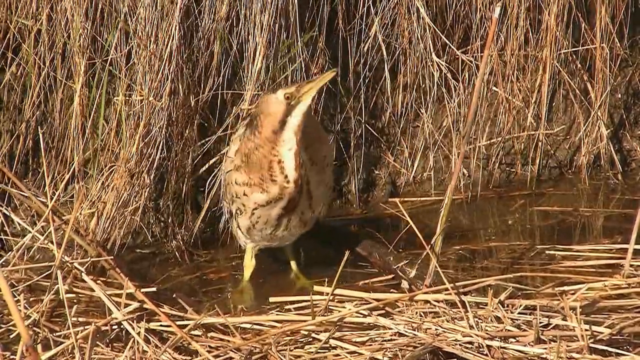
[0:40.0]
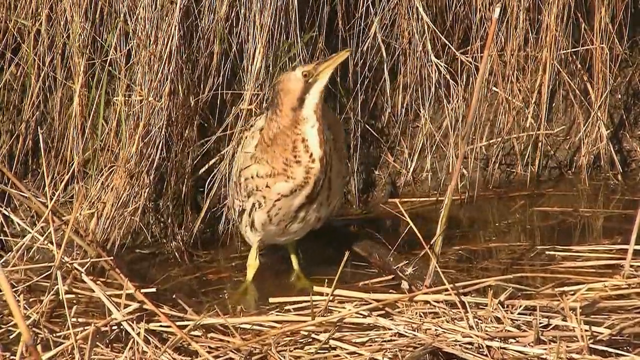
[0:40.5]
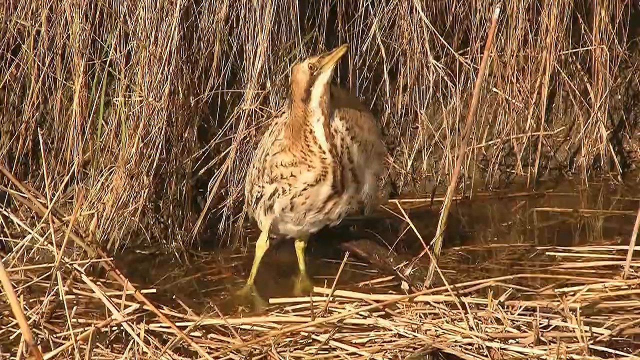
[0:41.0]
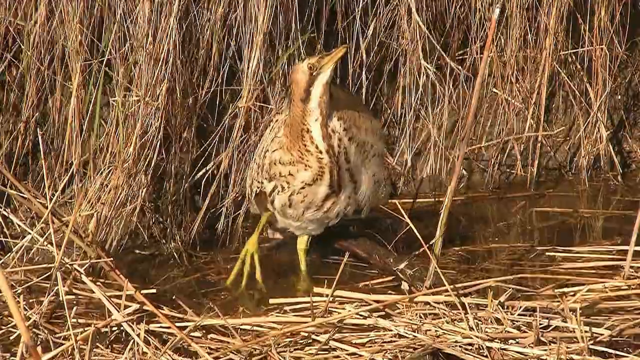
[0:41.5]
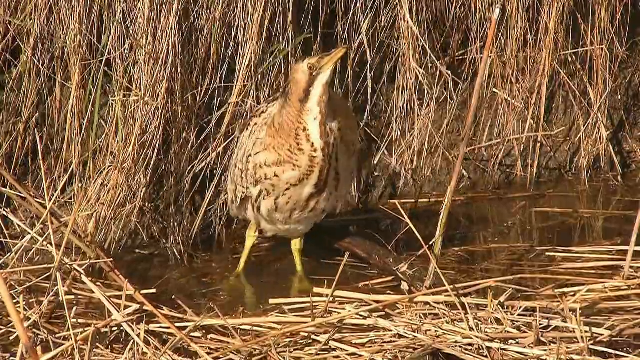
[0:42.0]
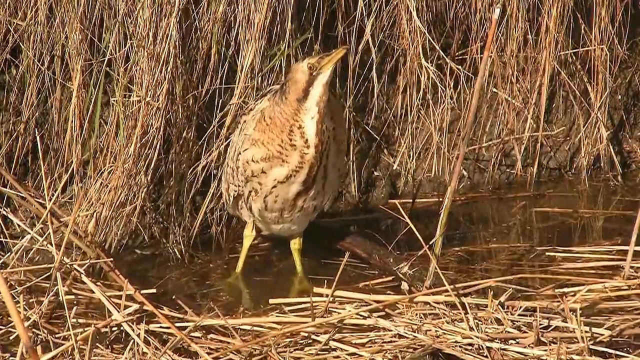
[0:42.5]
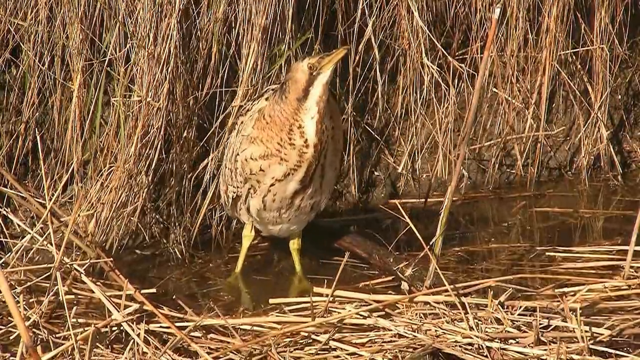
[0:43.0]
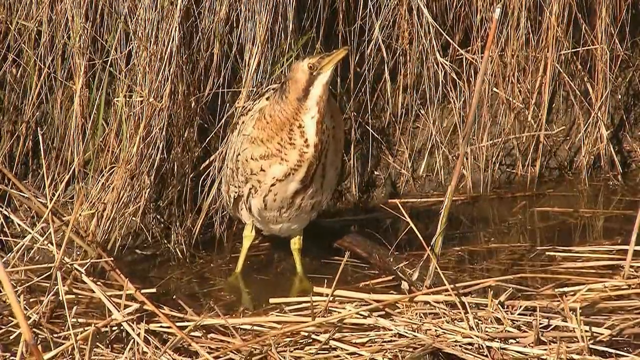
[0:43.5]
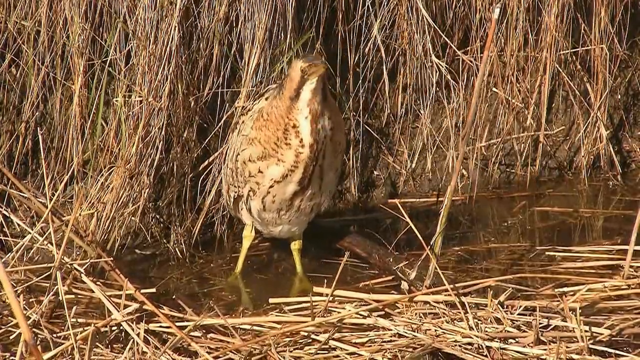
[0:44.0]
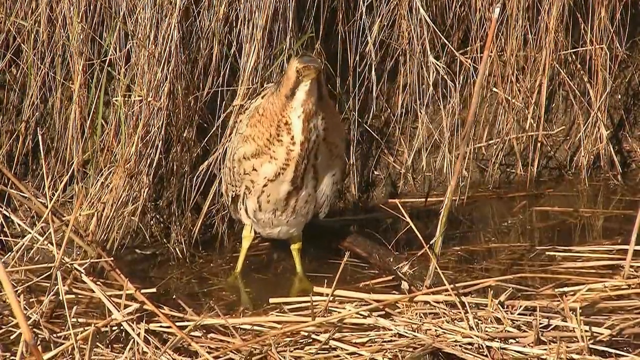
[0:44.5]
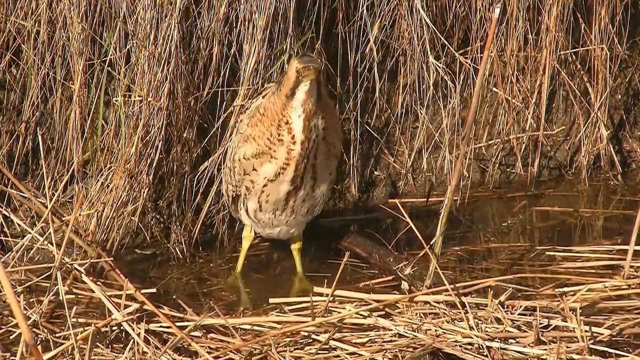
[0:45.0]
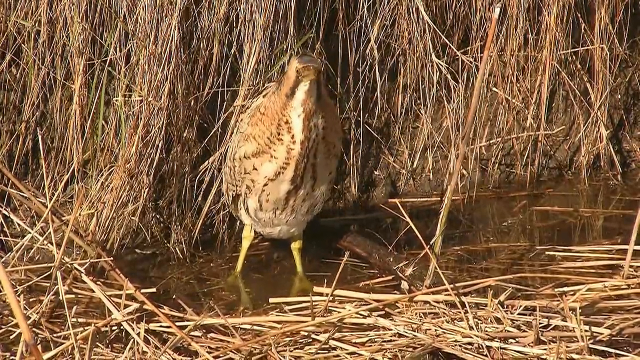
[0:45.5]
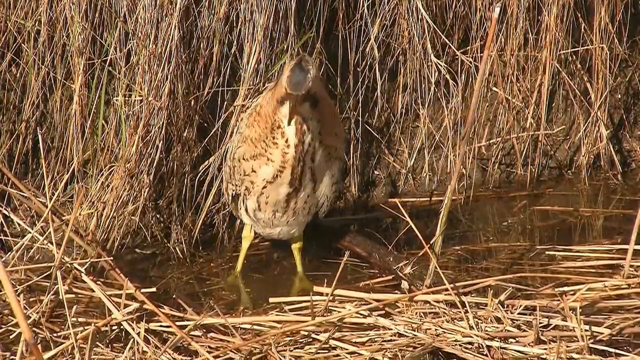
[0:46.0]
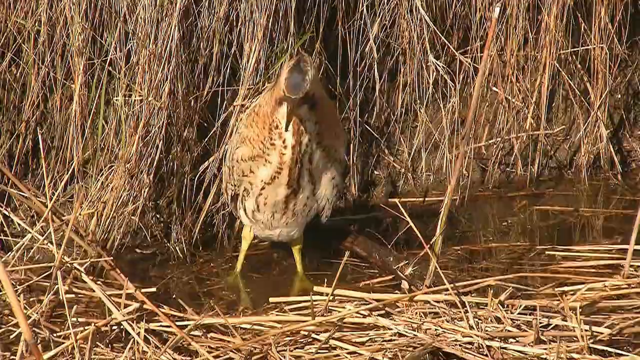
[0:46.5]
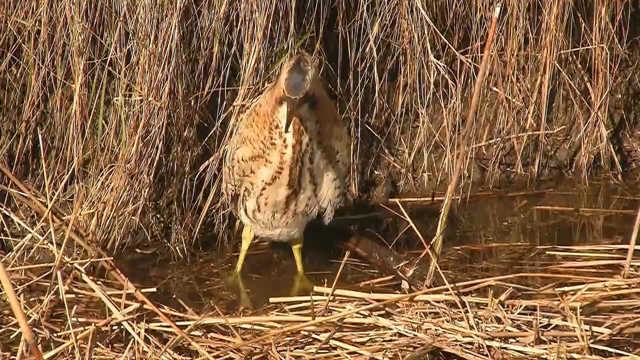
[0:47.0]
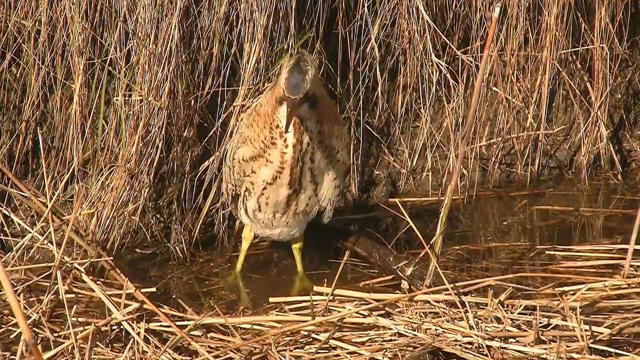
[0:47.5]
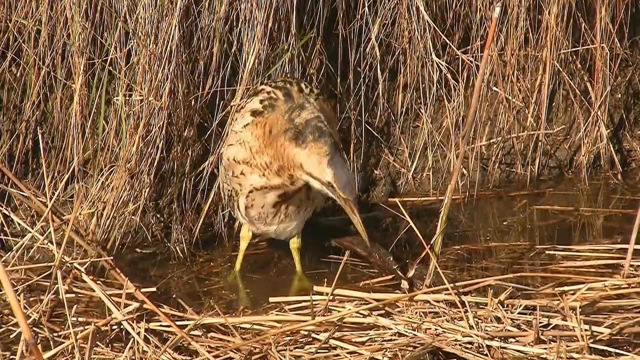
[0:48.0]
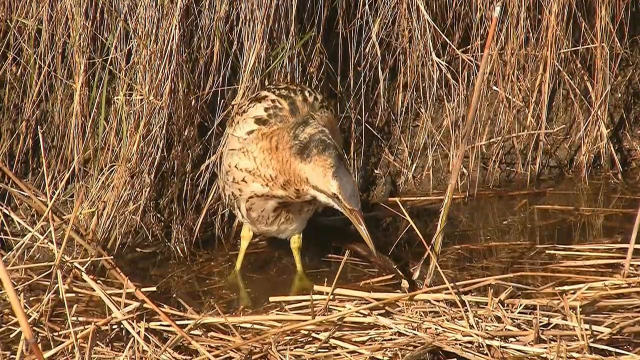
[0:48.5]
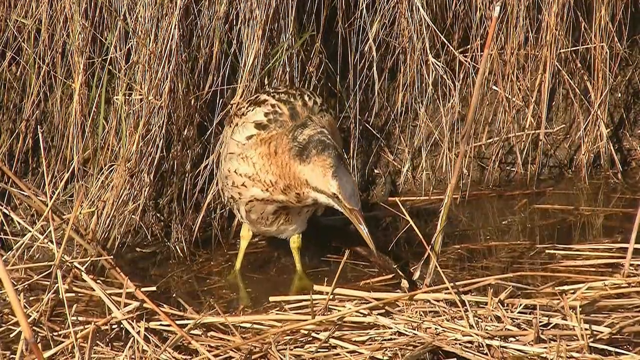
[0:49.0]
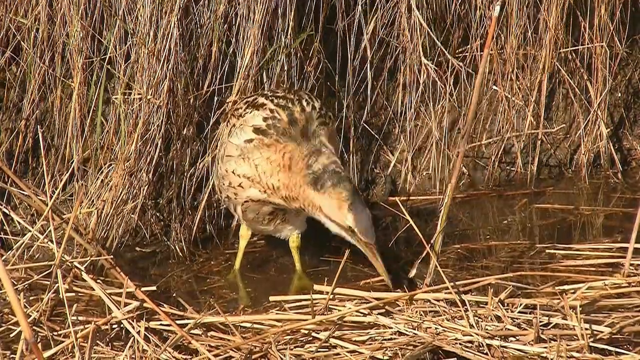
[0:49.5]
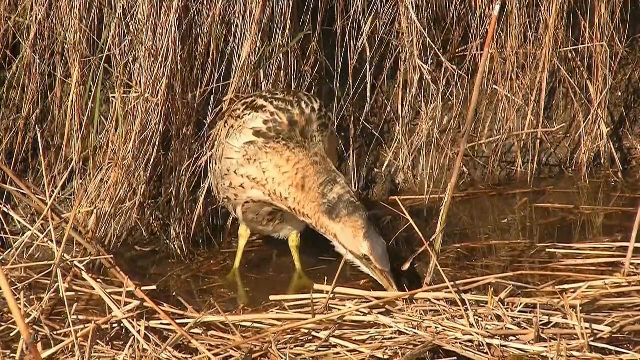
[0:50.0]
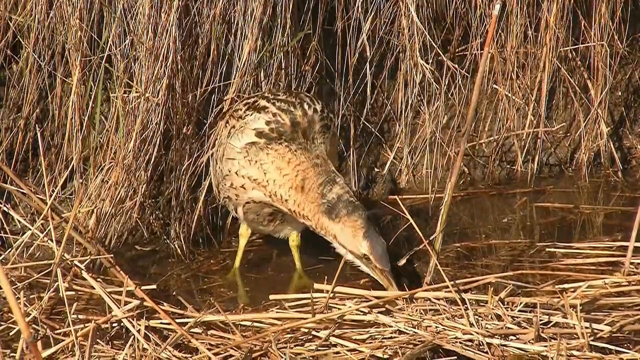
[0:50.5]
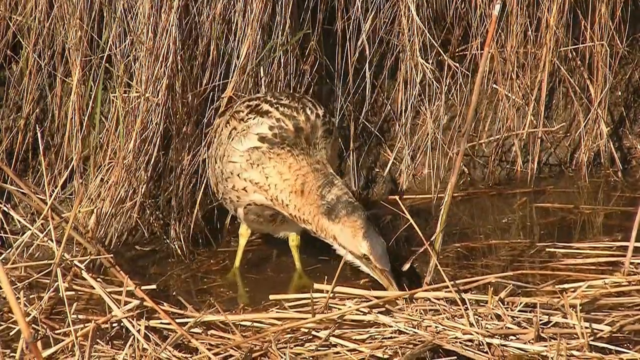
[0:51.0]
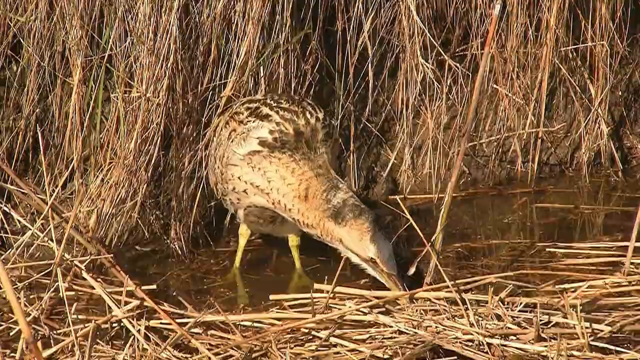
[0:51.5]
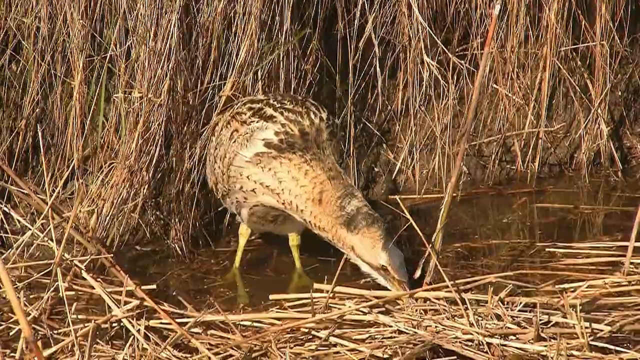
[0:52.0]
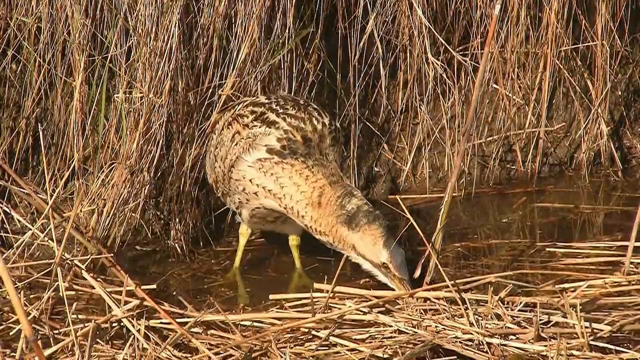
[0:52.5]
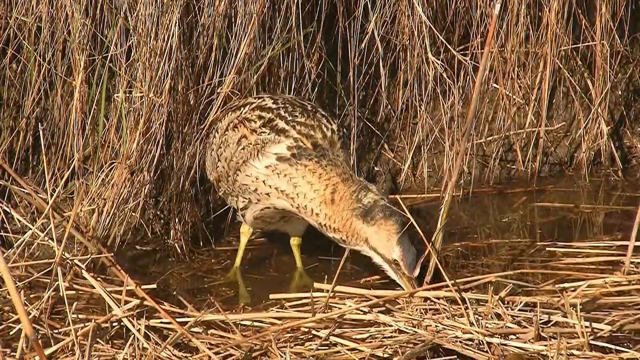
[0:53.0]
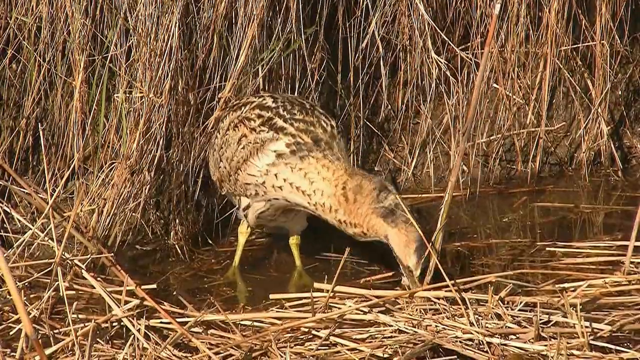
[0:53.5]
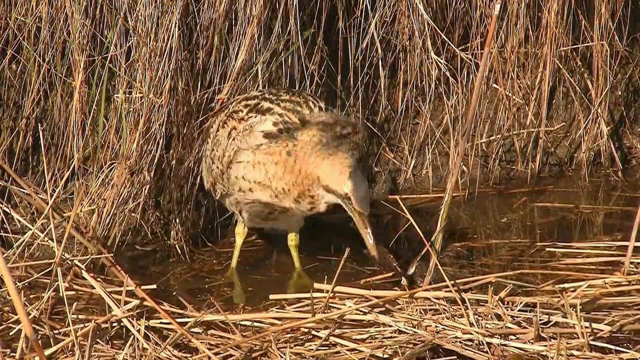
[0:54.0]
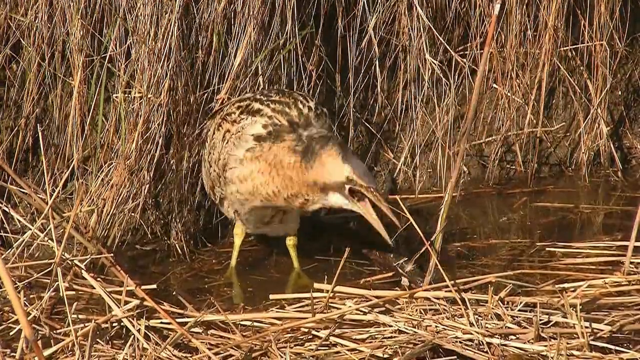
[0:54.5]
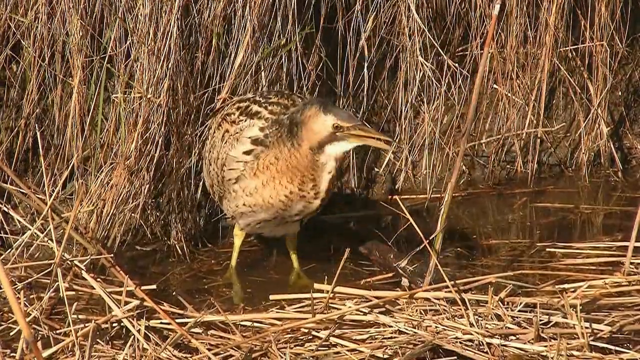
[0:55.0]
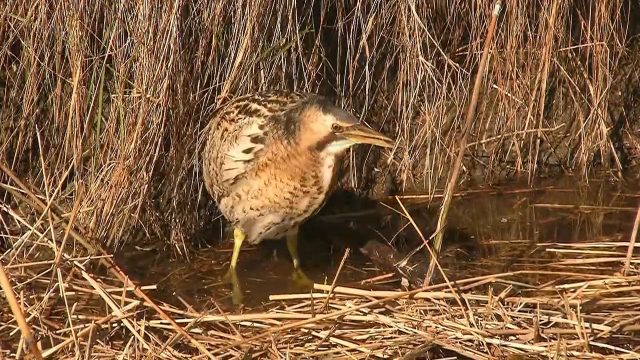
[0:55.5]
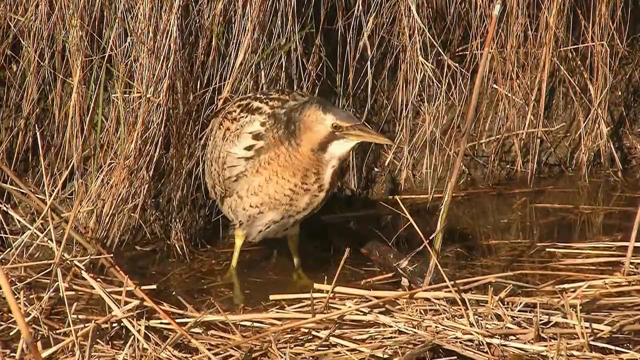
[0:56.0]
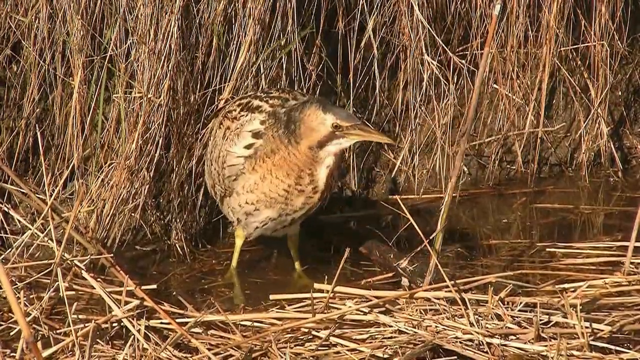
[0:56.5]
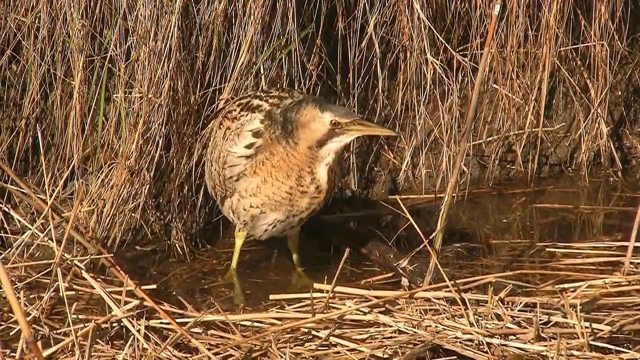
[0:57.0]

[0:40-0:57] The bittern stands in water about two inches deep, up to its knees, about a foot from the shore. It looks up toward the sky to its left, apparently sensing something dangerous flying overhead, then looks back down at the water and continues searching for food, such as a frog, snake, crustacean or small fish to grab with its yellow beak. It looks around, makes a quick stab, and comes up with something that is not food, so it does not swallow it. On the shore are numerous beige and yellow stalks of straw-like grass that are hollow and break off easily, and many bits of the grass float in the water. The bittern ignores them and keeps focusing on finding food.